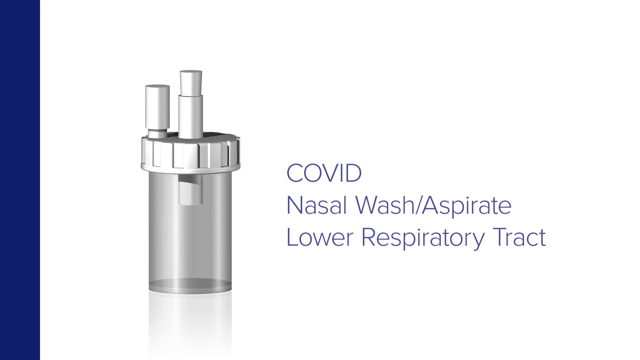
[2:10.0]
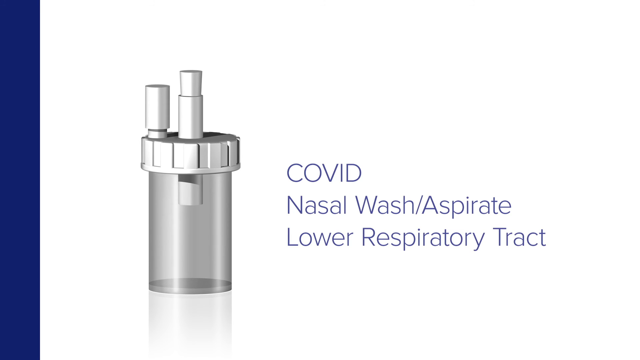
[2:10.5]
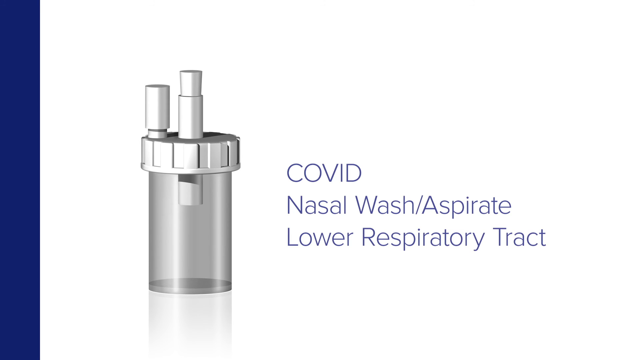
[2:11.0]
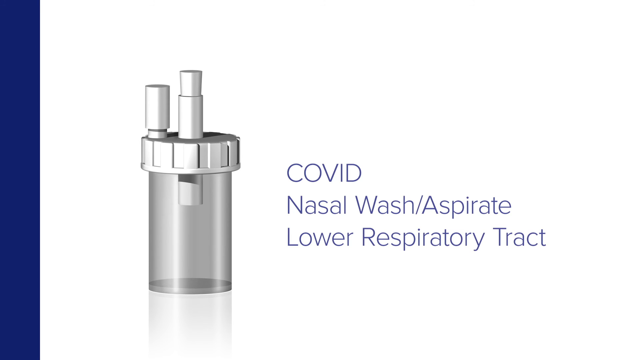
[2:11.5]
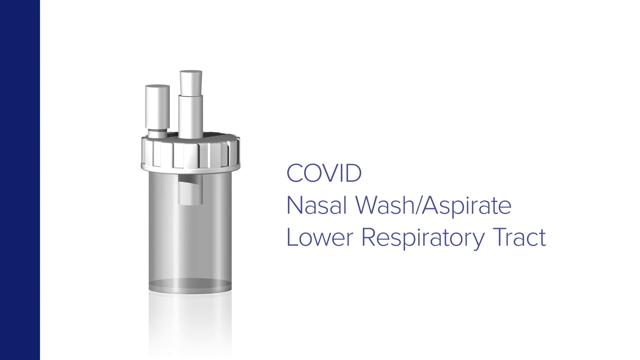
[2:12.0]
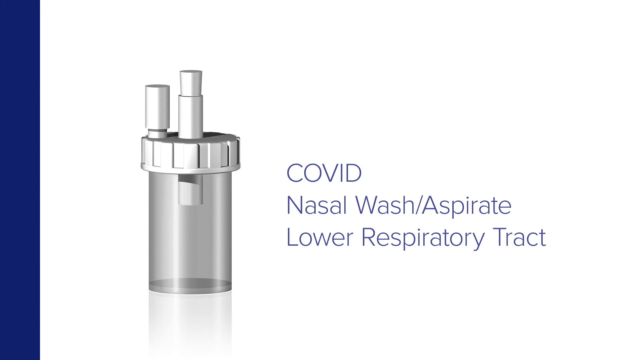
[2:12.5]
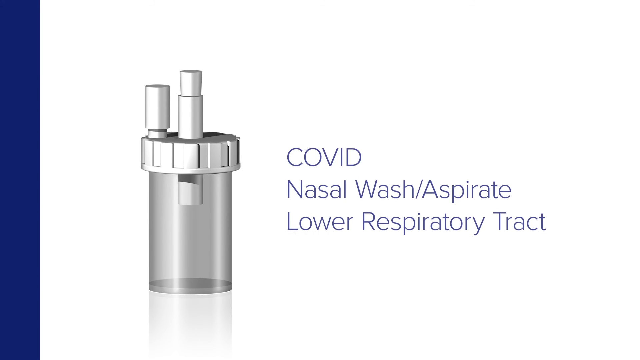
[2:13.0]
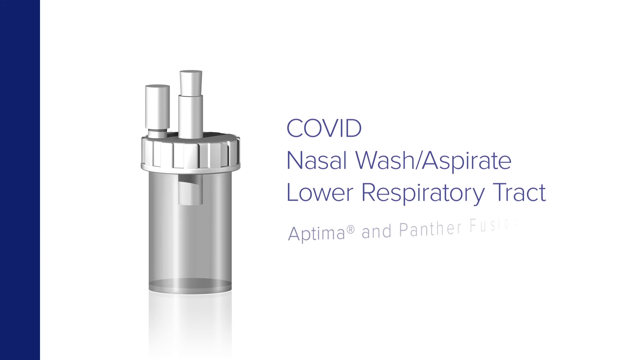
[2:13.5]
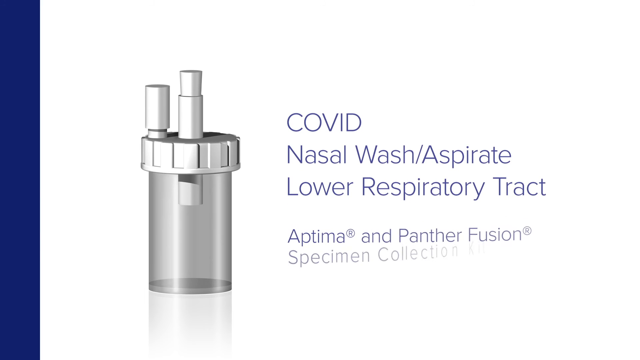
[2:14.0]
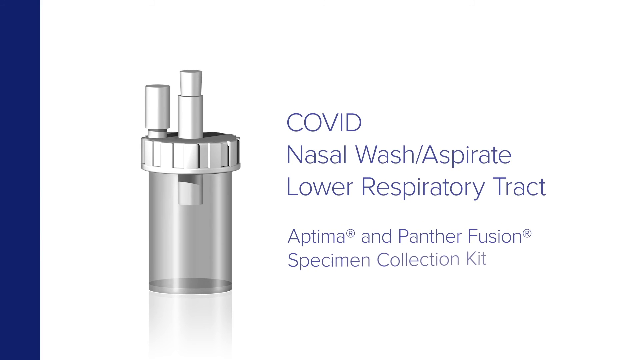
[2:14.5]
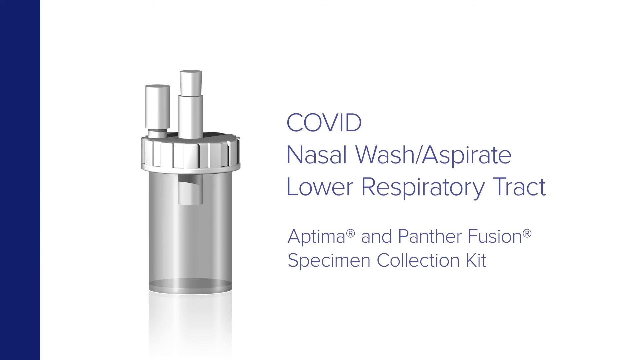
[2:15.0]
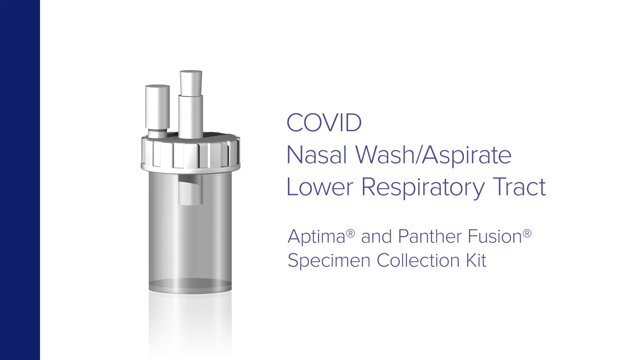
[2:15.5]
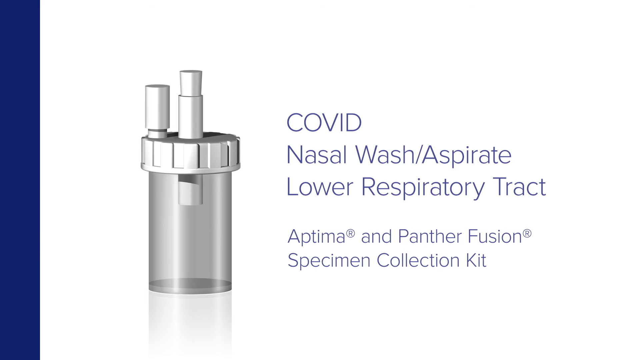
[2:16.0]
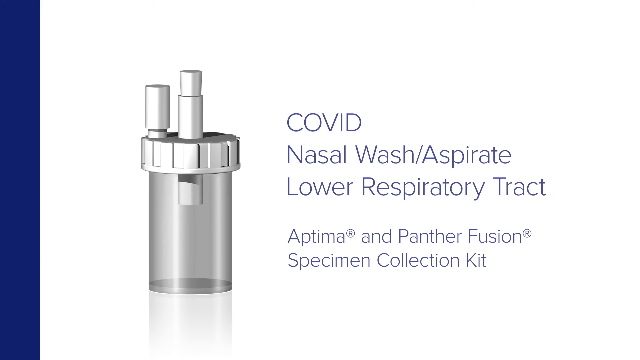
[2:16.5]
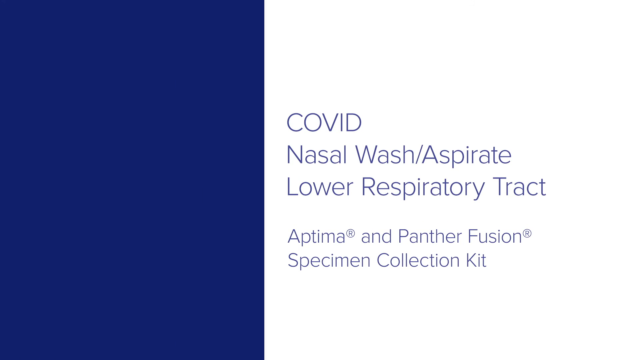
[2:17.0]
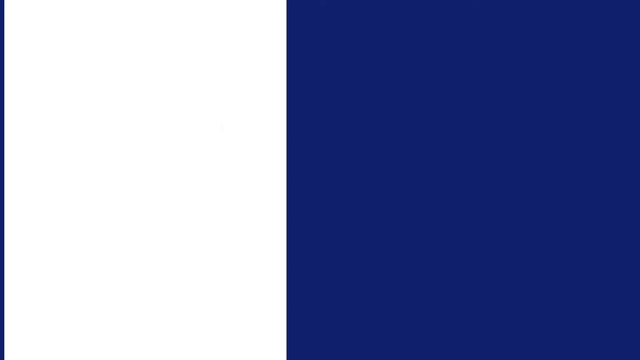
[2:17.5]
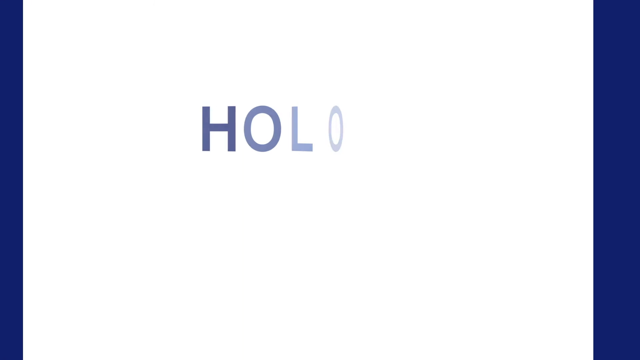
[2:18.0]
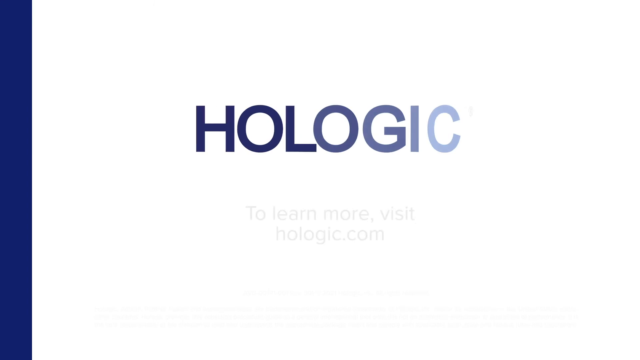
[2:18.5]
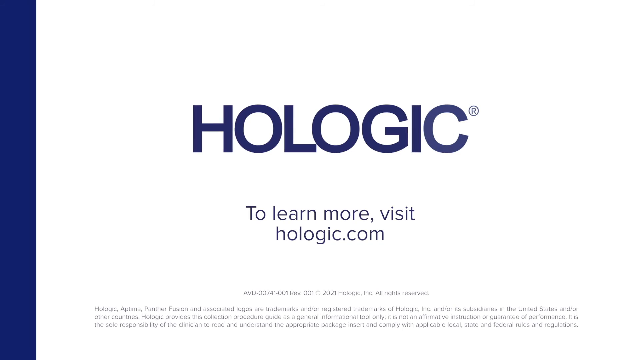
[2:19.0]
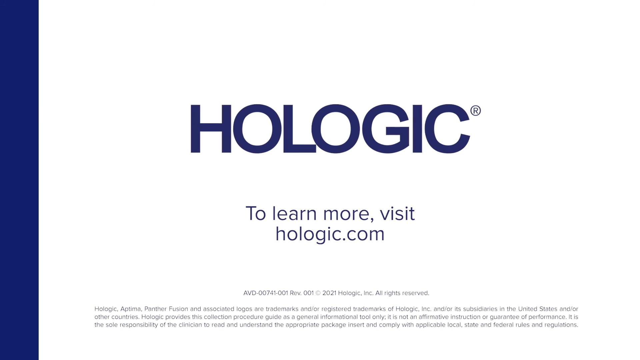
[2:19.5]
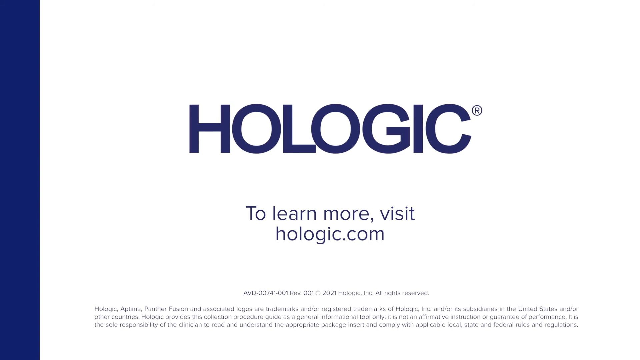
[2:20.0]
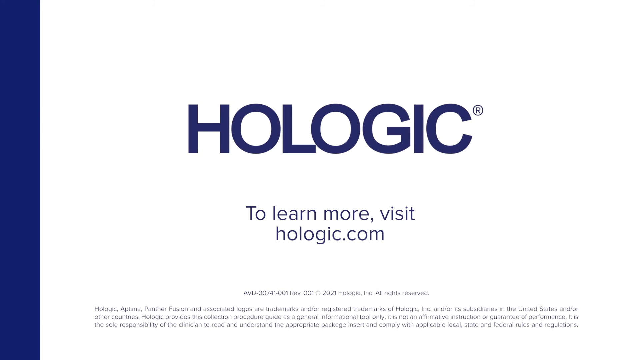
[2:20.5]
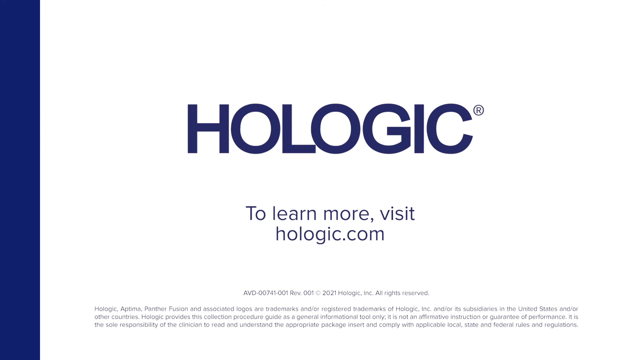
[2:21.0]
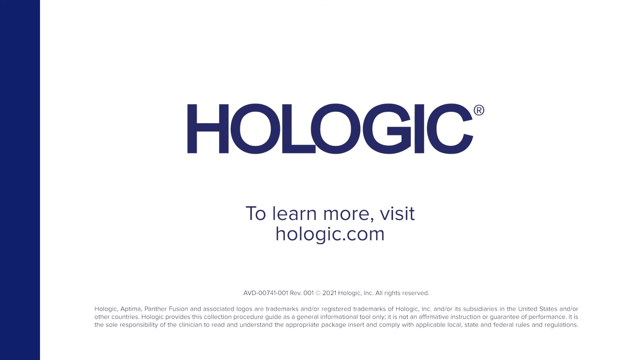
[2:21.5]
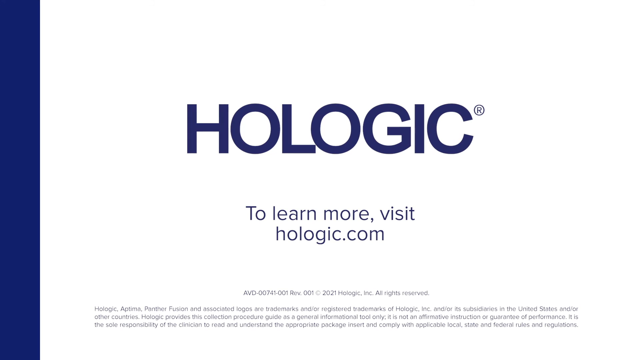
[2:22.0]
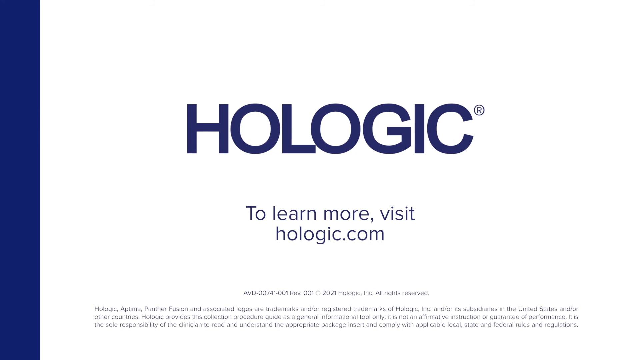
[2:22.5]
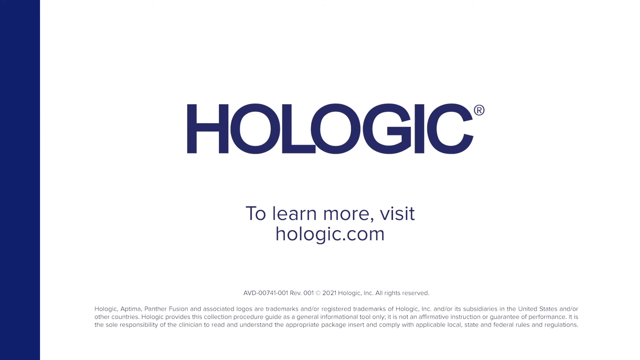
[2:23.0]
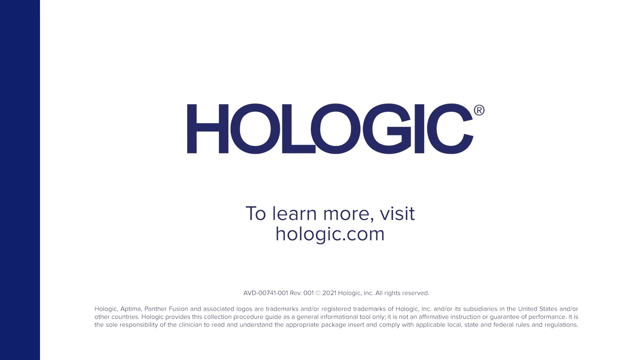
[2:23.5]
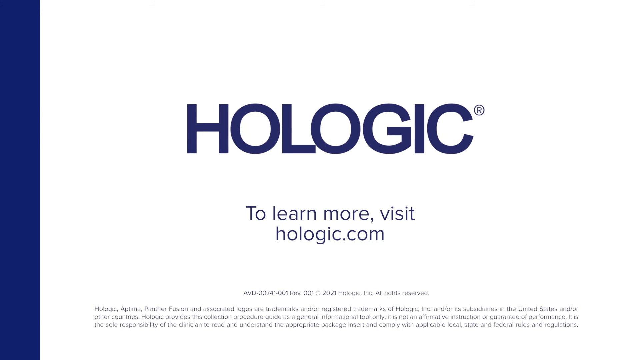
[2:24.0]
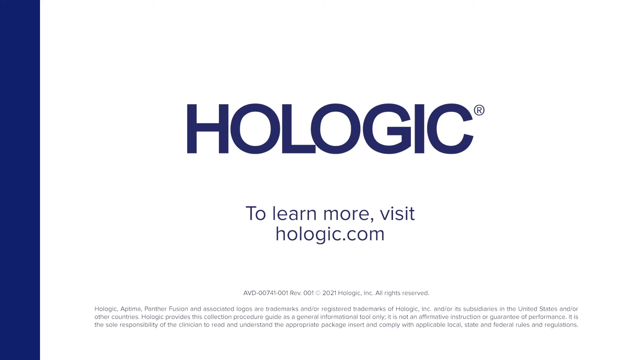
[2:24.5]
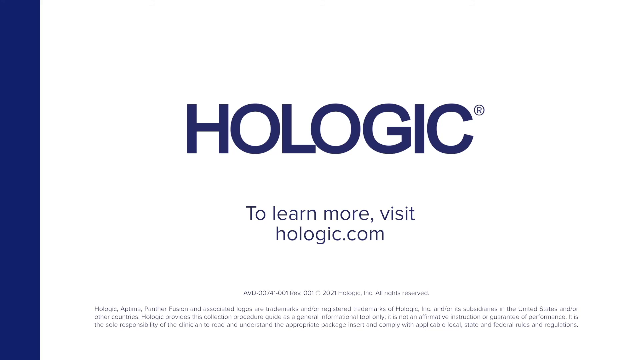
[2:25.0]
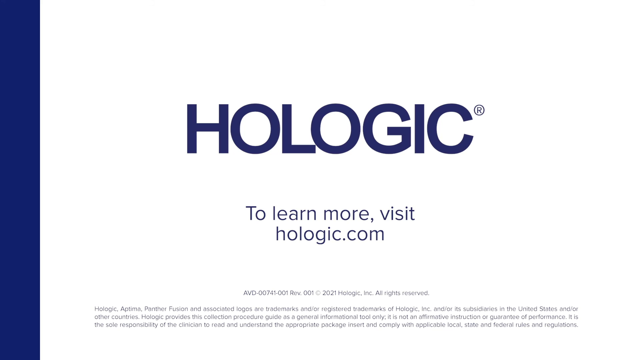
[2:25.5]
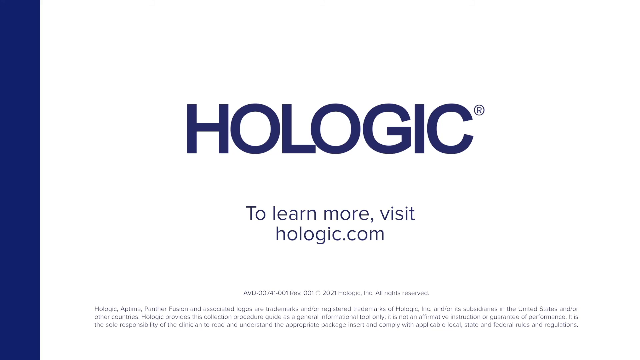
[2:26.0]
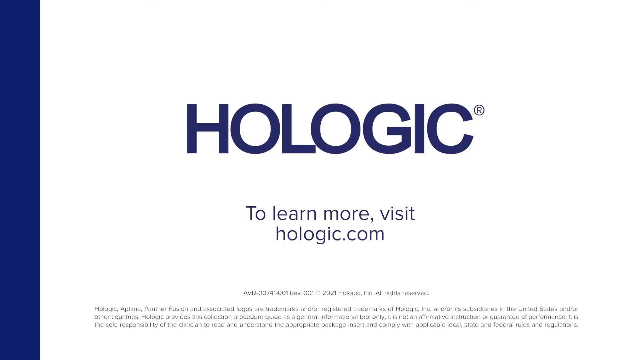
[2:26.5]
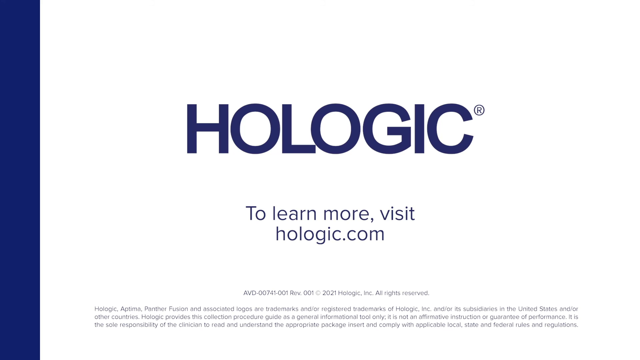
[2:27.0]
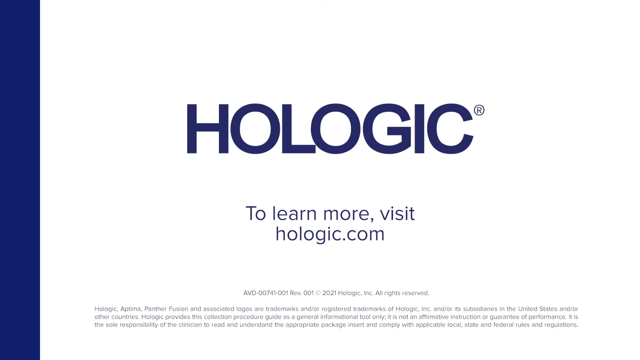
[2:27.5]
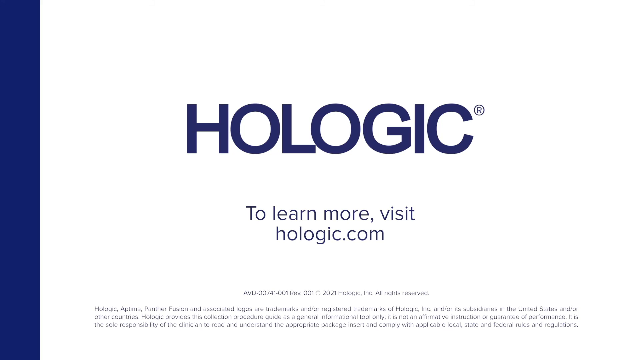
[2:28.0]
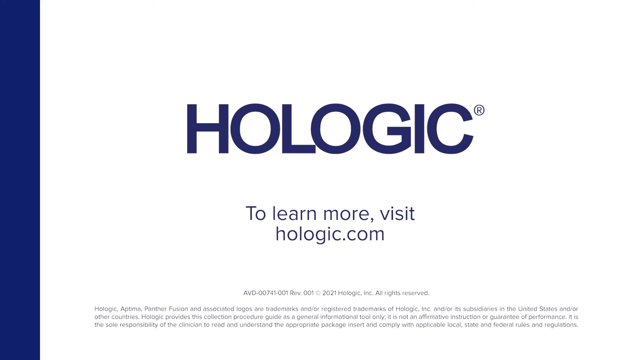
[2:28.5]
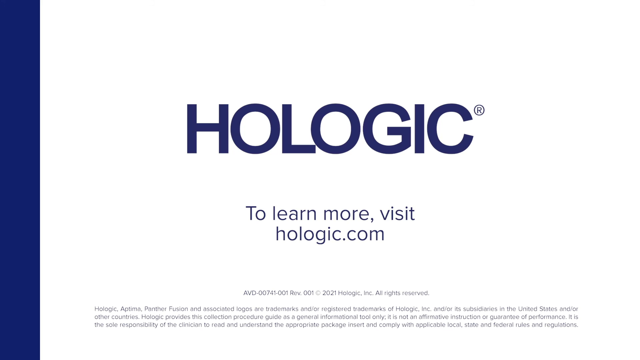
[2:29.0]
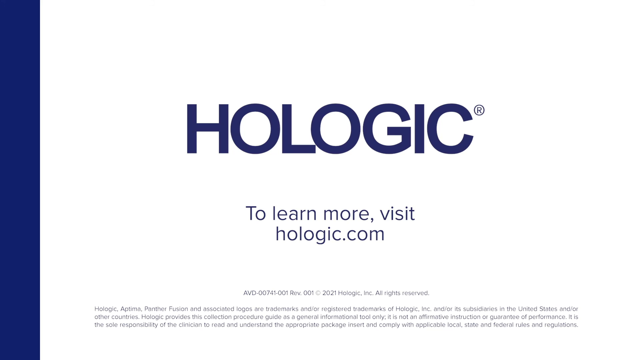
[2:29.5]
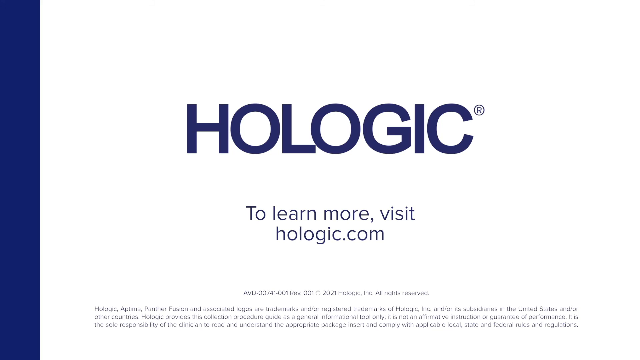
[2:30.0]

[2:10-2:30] The specimen bottle illustration is on the left, and to the right are the navy words "COVID," "nasal wash aspirate" and "lower respiratory tract" in three lines. These lines gently lift up to make room for smaller navy text underneath reading "Aptima" and "Panther Fusion," each with a raised registered R, and a next line reading "specimen collection kit"; these words gently fall down into place. Blue slides across the screen, and navy words appear reading "HOLOGIC"; the letters start off light blue and almost seem to turn slightly and become dark navy or royal blue. Underneath it says "to learn more visit hologic.com".